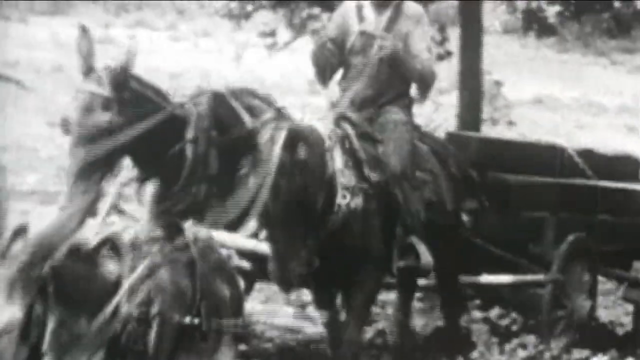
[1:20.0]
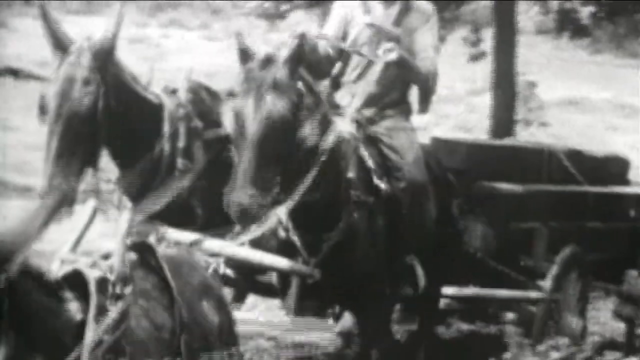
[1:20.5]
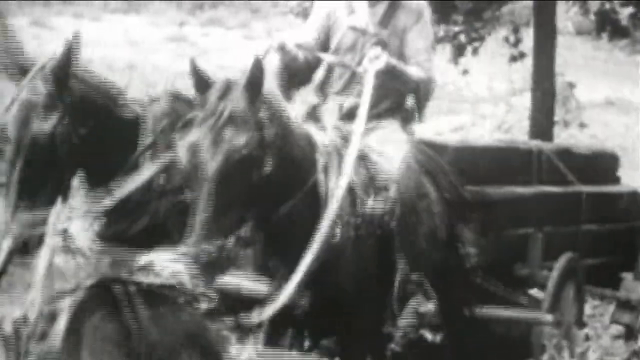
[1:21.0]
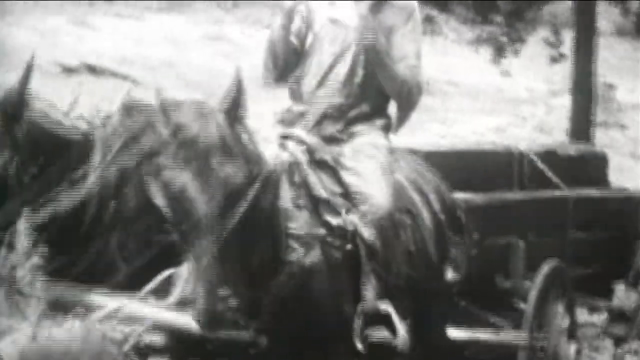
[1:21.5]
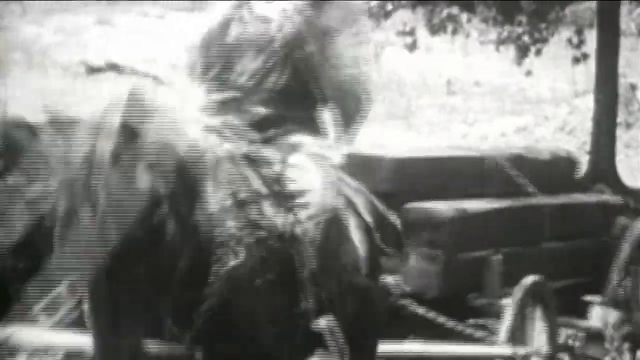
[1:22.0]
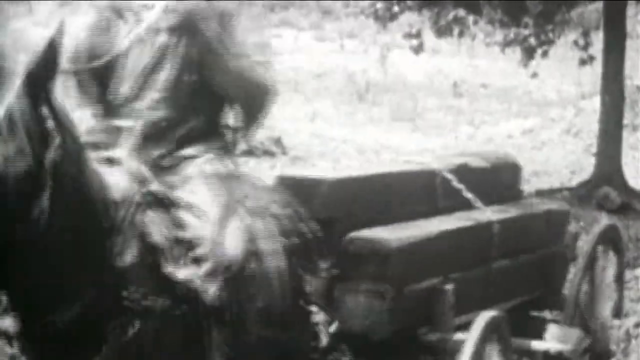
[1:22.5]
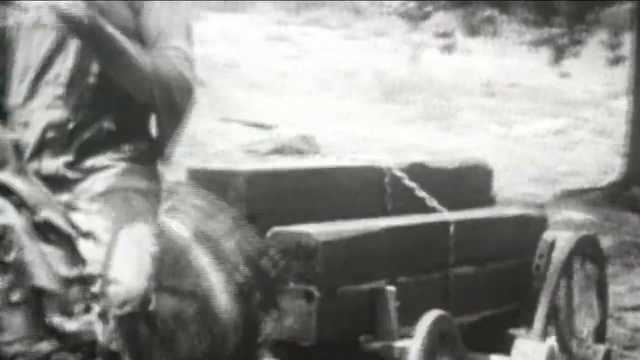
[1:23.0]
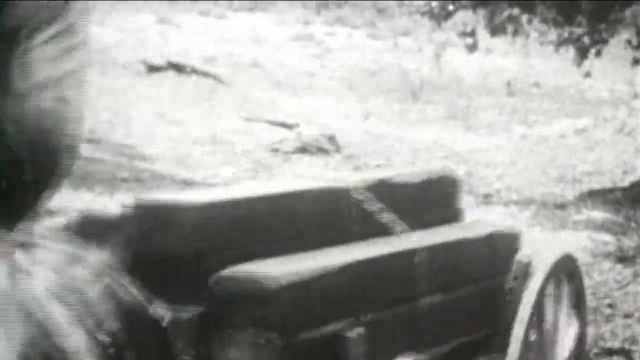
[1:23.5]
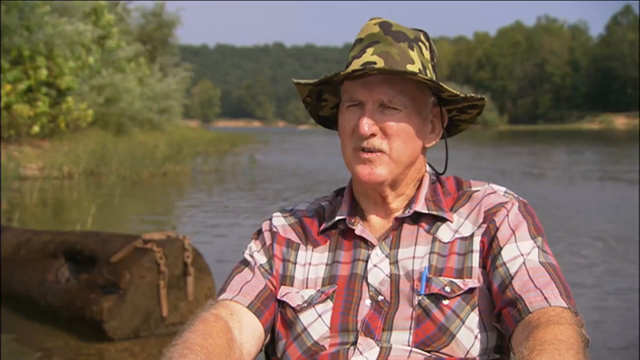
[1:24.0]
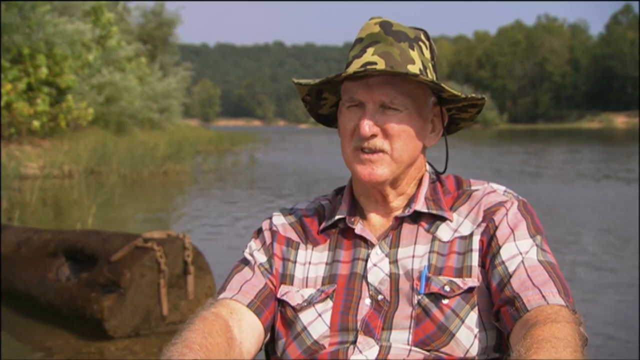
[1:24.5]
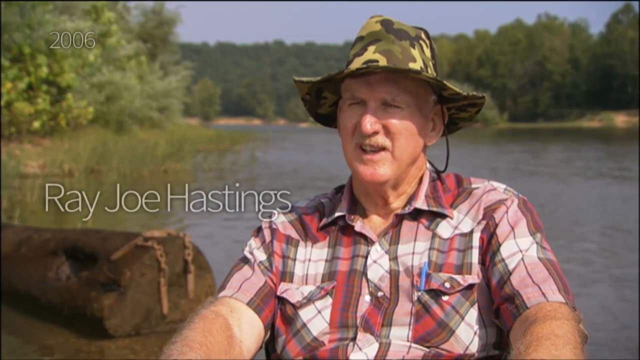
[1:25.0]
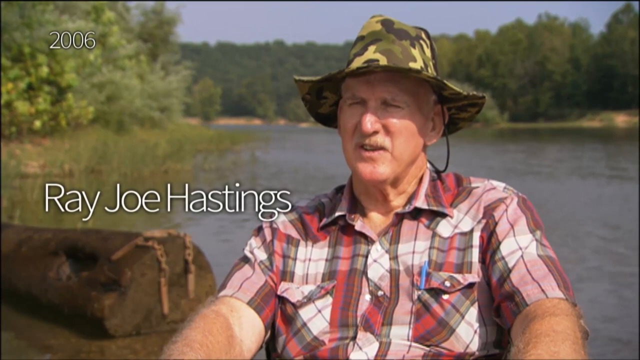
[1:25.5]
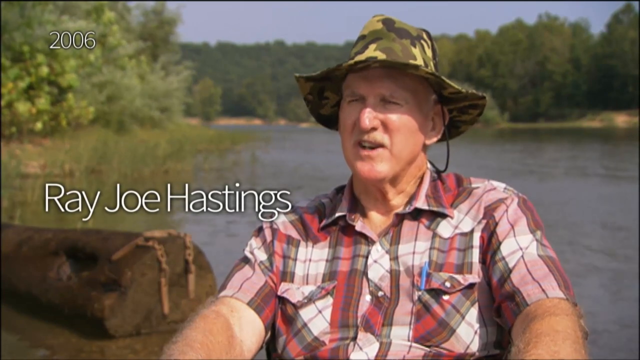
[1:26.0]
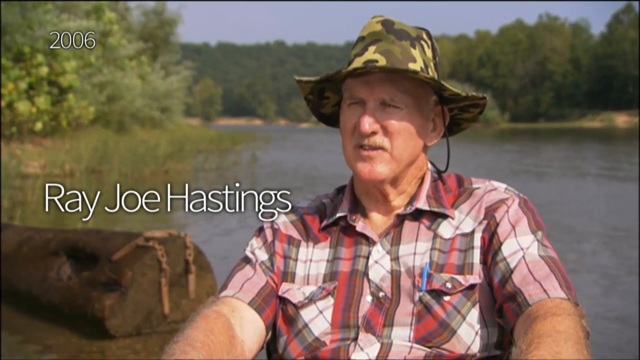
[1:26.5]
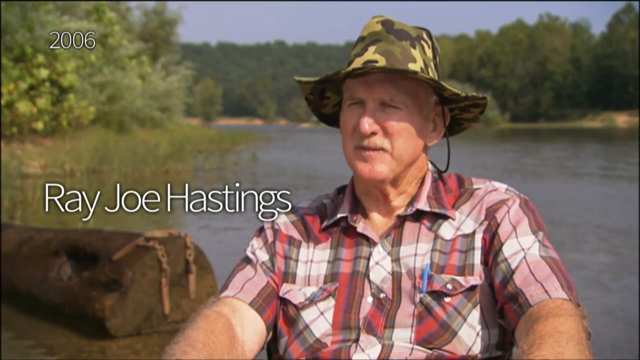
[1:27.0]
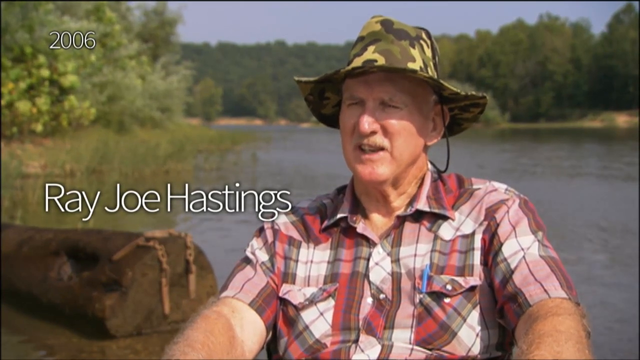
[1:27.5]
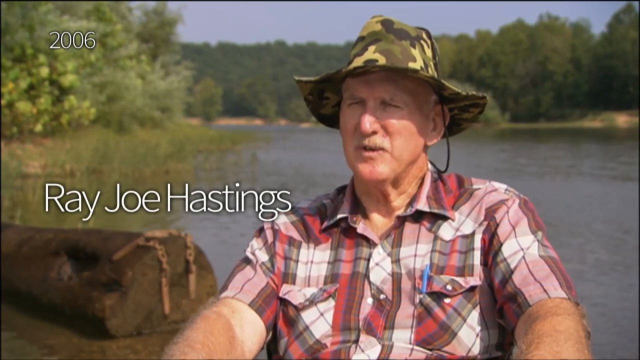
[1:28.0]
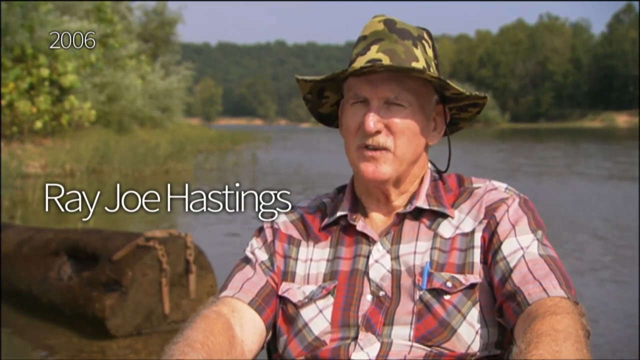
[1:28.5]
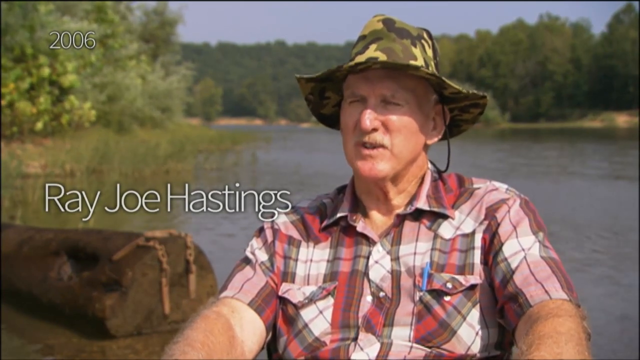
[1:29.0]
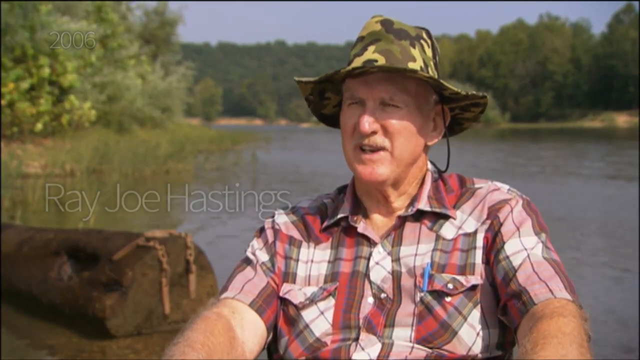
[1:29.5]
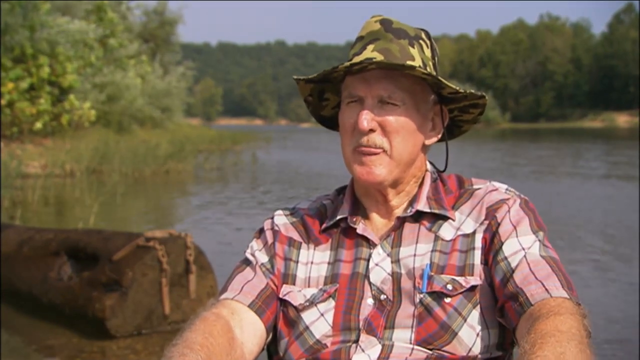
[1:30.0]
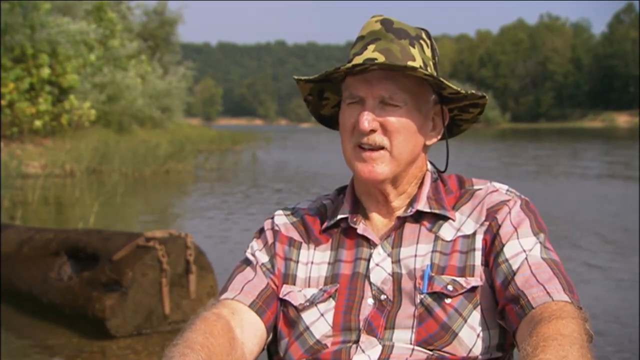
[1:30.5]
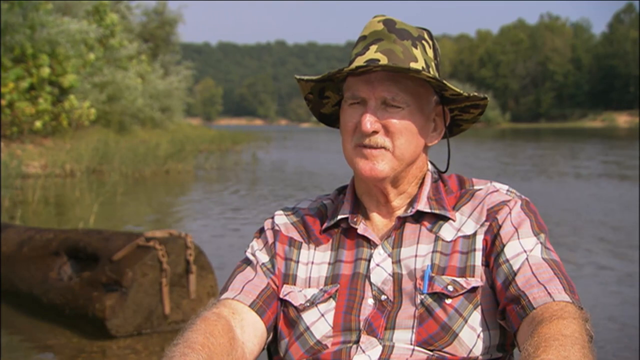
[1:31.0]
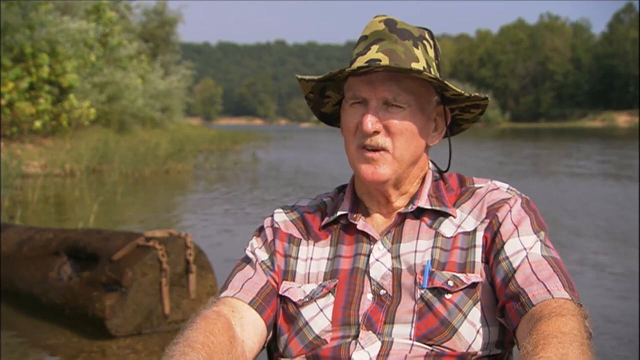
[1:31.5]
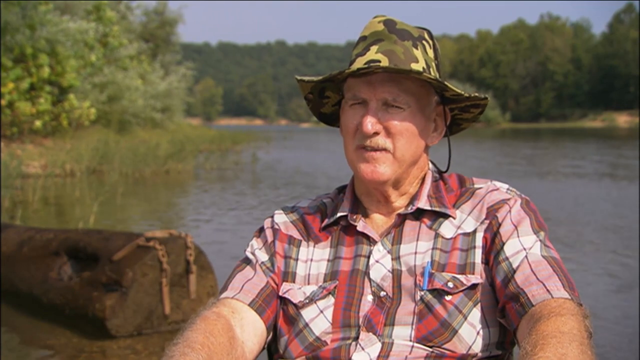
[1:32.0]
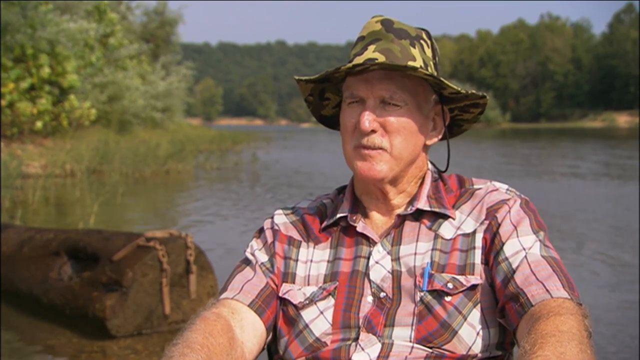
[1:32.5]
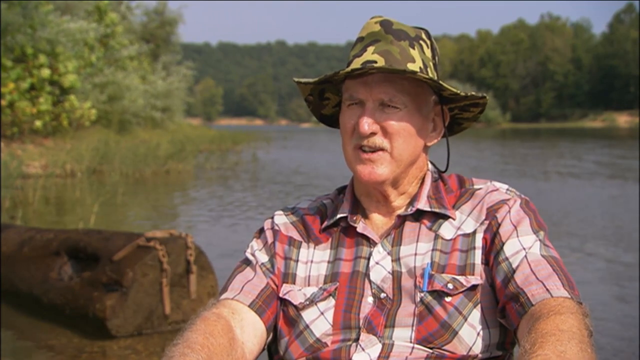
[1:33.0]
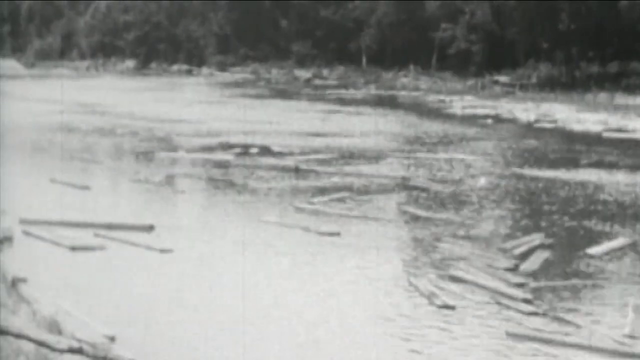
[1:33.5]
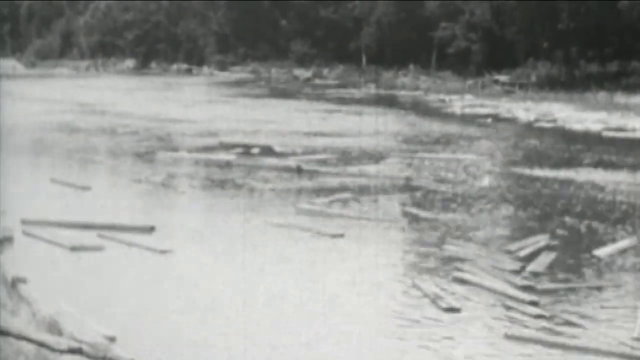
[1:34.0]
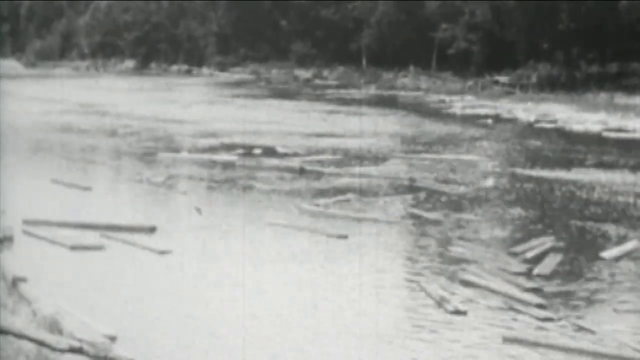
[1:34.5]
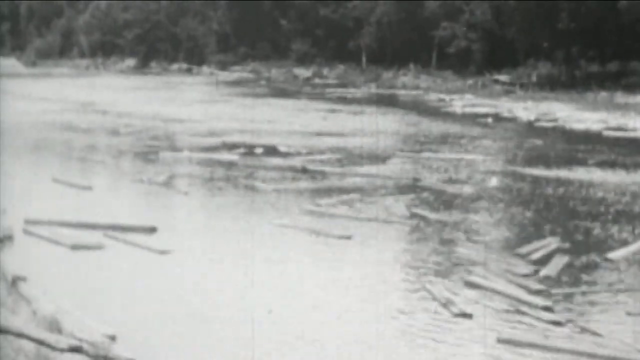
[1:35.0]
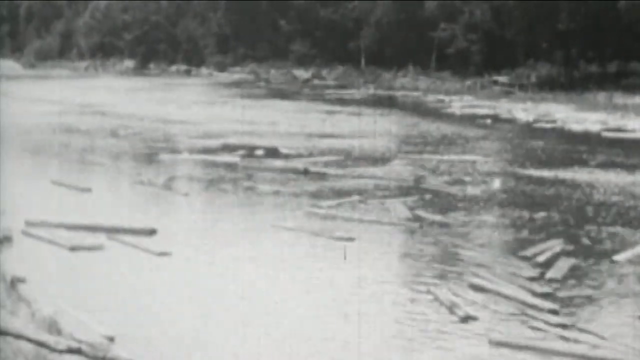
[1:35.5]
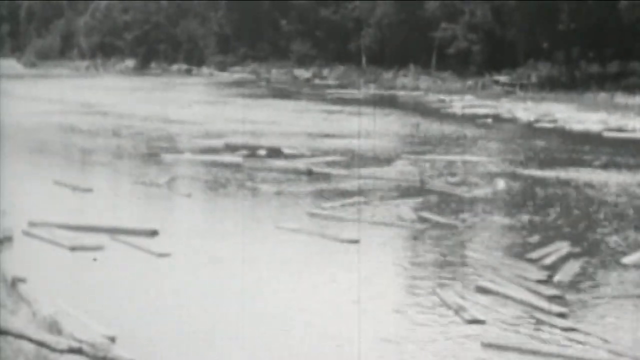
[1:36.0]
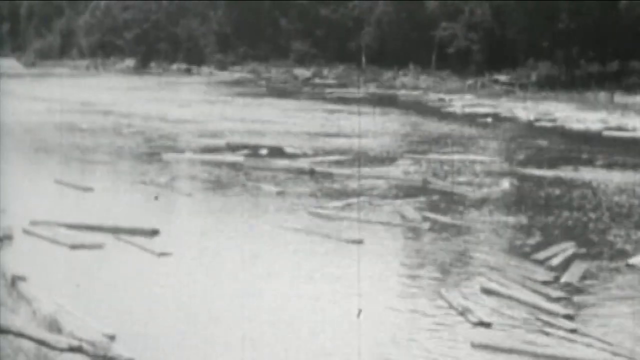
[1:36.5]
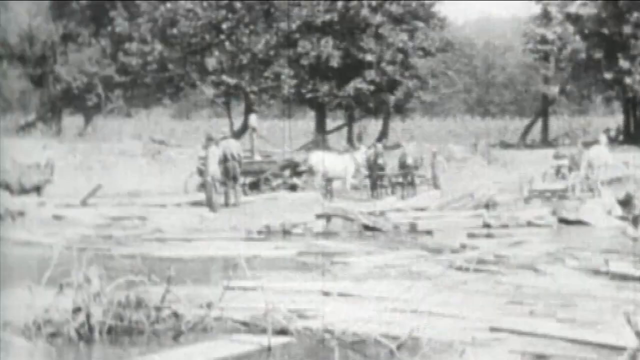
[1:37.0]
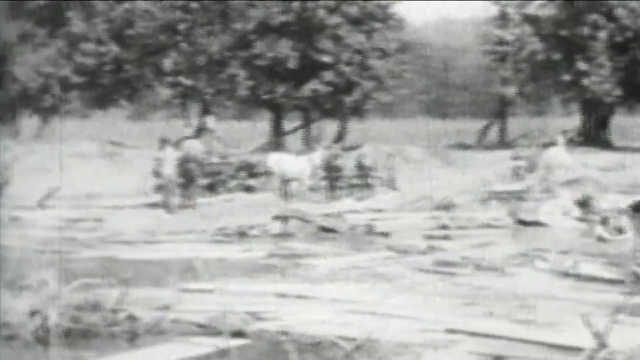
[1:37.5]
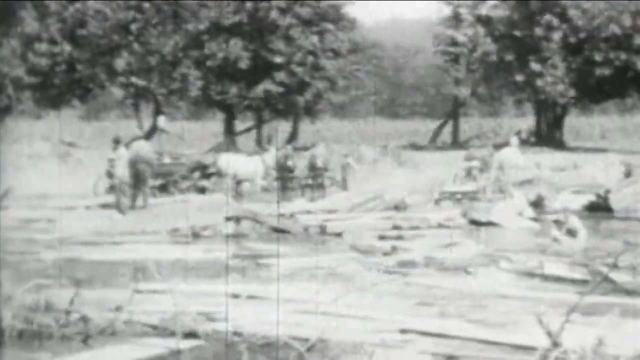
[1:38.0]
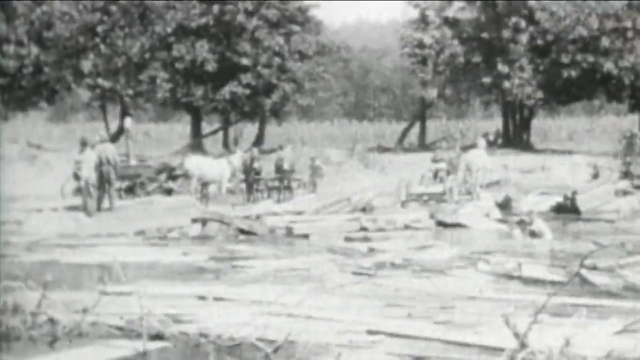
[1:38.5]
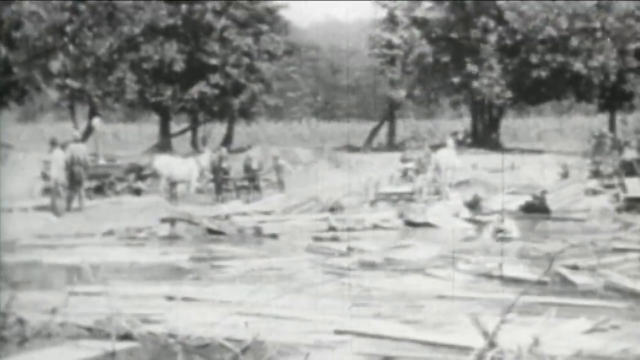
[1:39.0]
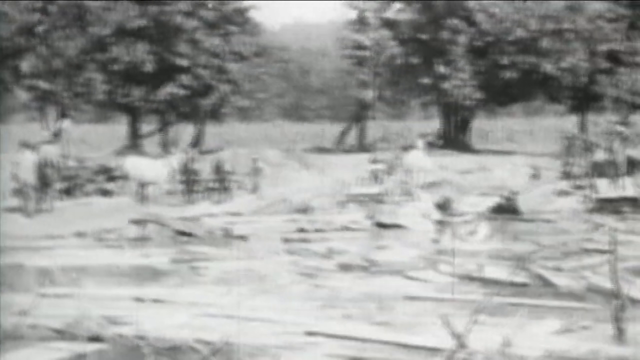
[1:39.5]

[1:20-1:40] Another older Caucasian man appears, wearing a green camouflage hat and a red and white shirt. He looks like he is talking in front of a river, with green trees in the background and blue skies in the daytime. The video then returns to black-and-white footage of logs going down a river. More horses and people handle the logs, and people on horses carry logs as well; mostly donkeys, mules and horses are seen carrying the logs.